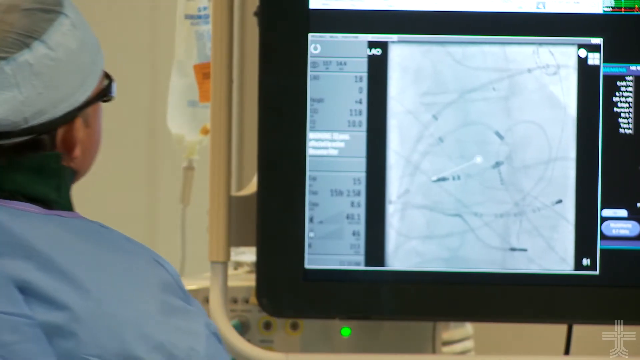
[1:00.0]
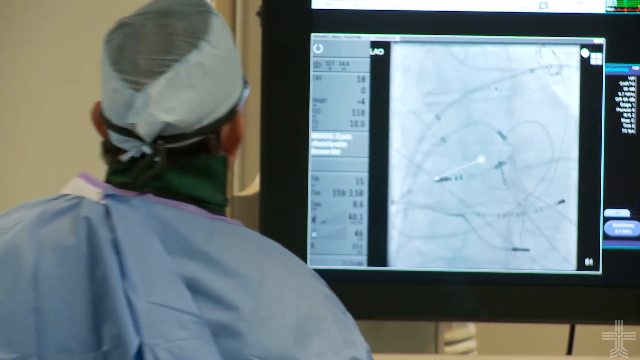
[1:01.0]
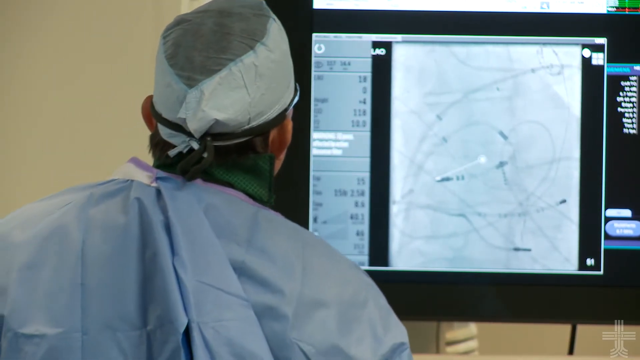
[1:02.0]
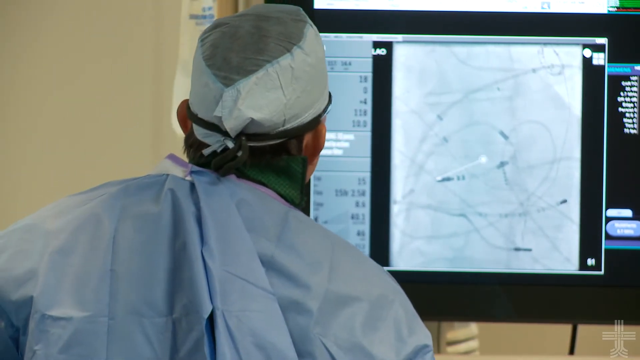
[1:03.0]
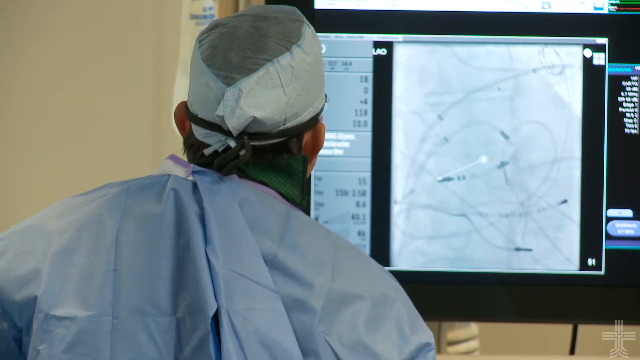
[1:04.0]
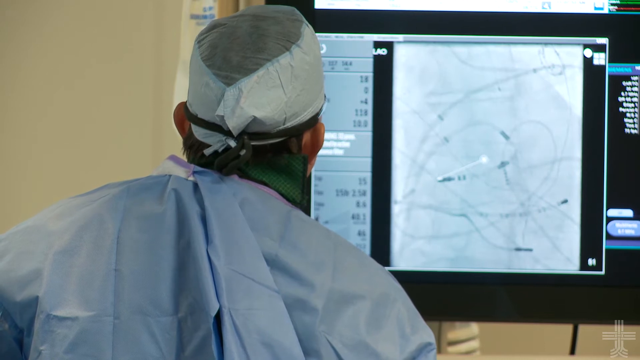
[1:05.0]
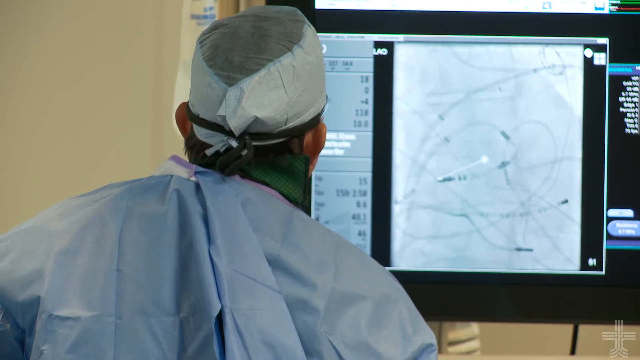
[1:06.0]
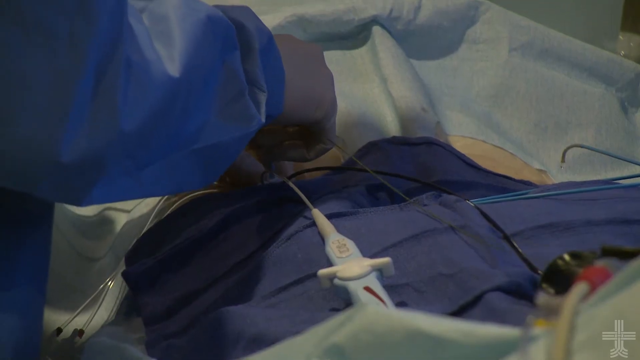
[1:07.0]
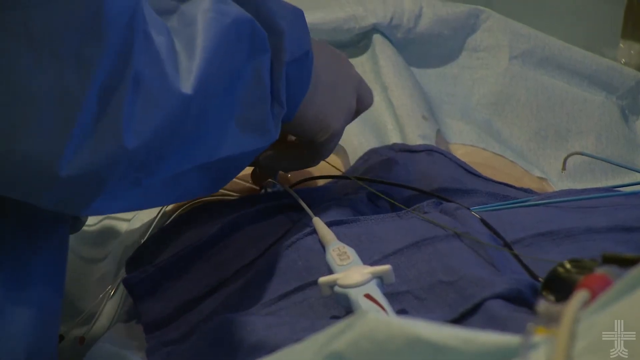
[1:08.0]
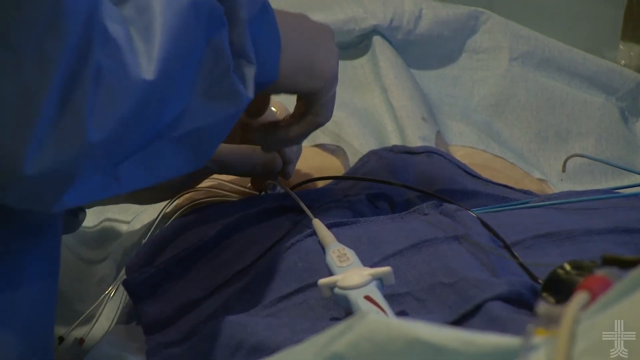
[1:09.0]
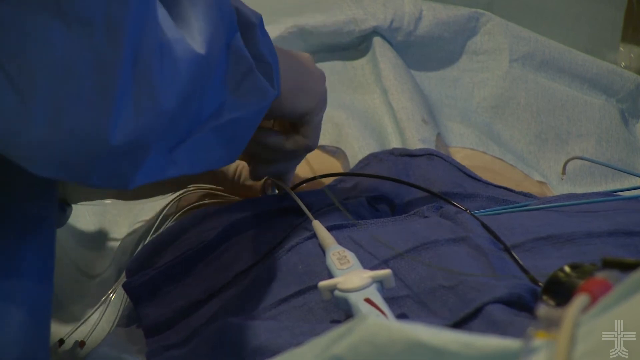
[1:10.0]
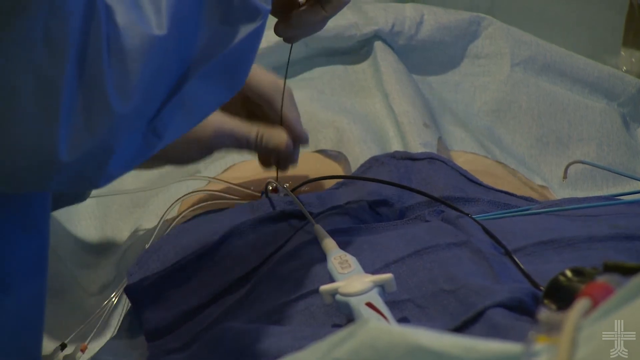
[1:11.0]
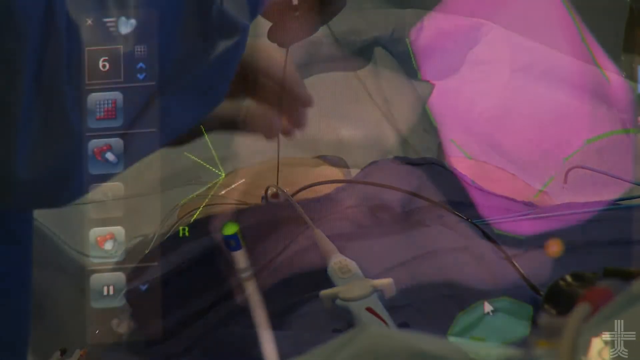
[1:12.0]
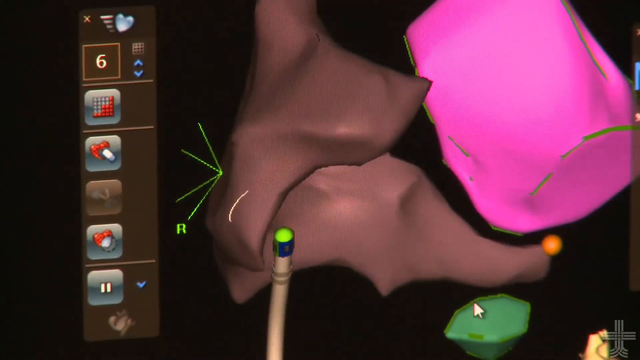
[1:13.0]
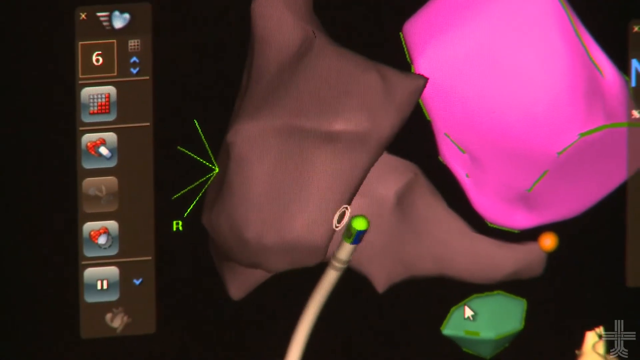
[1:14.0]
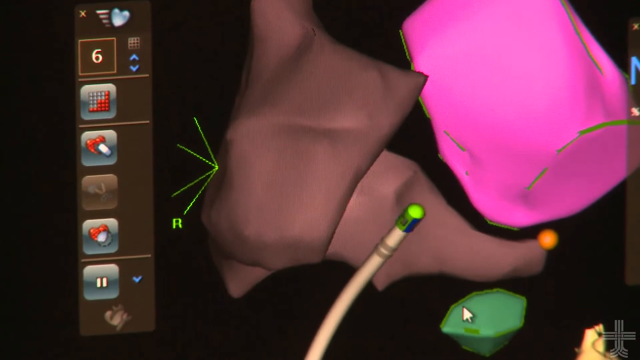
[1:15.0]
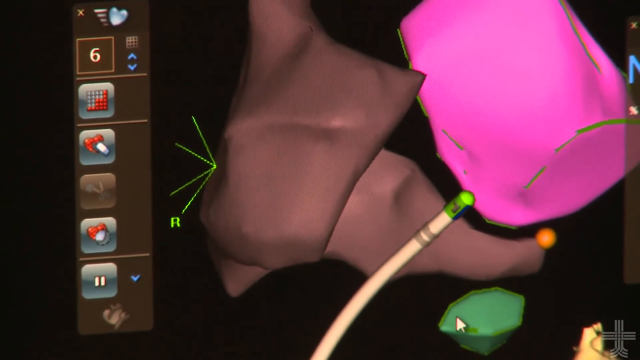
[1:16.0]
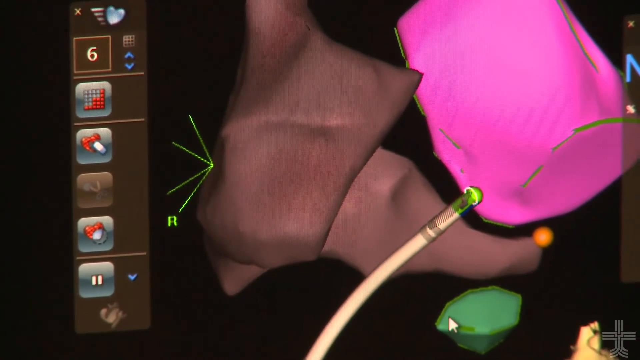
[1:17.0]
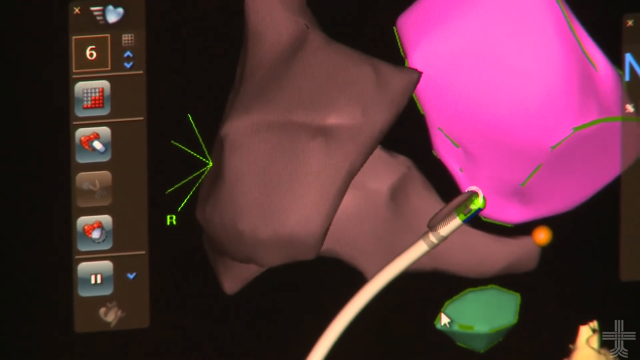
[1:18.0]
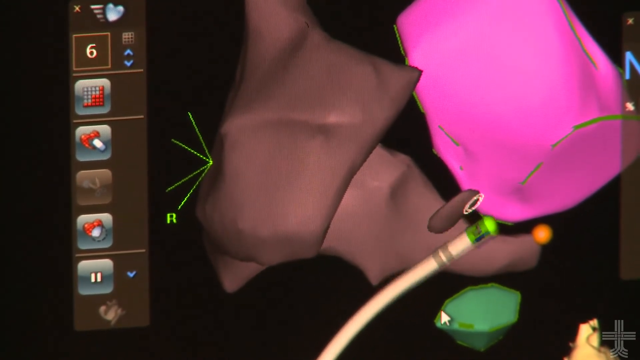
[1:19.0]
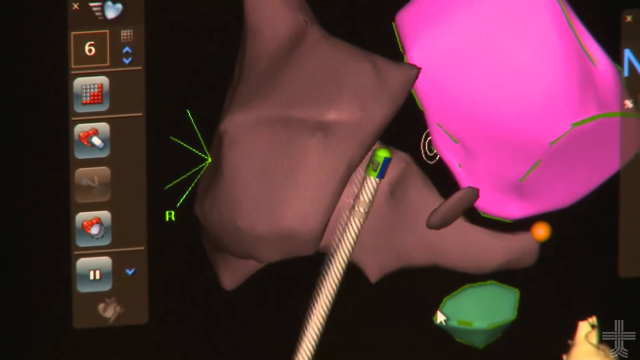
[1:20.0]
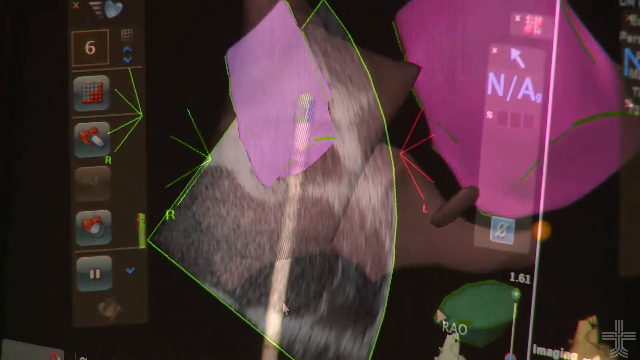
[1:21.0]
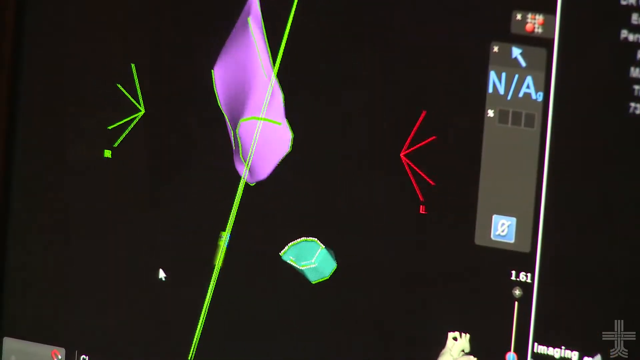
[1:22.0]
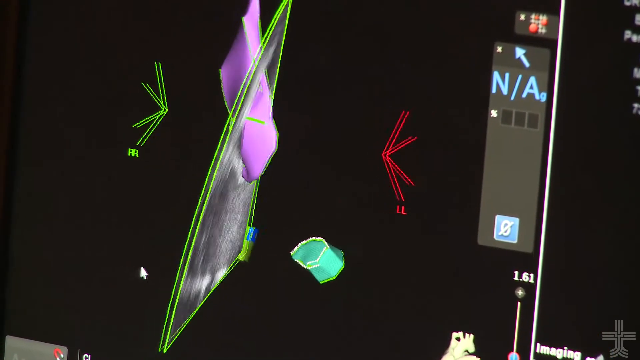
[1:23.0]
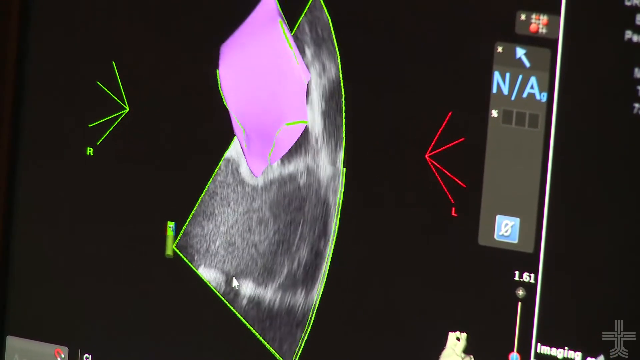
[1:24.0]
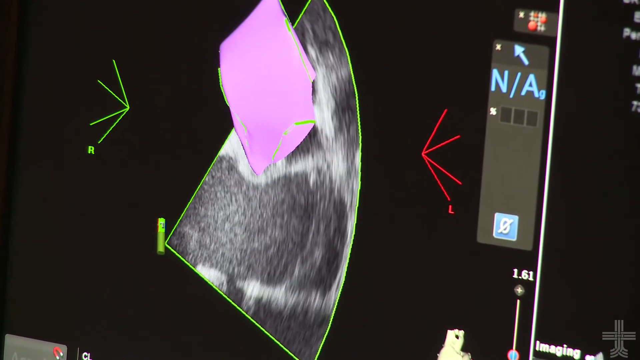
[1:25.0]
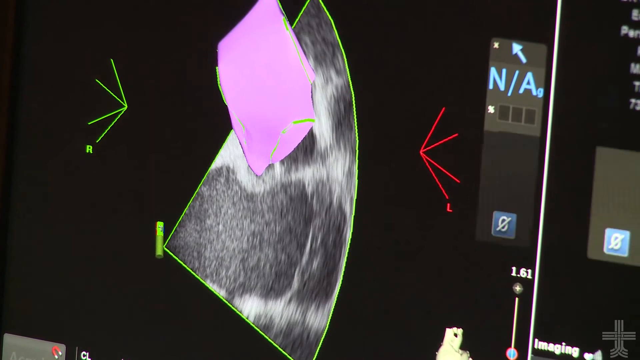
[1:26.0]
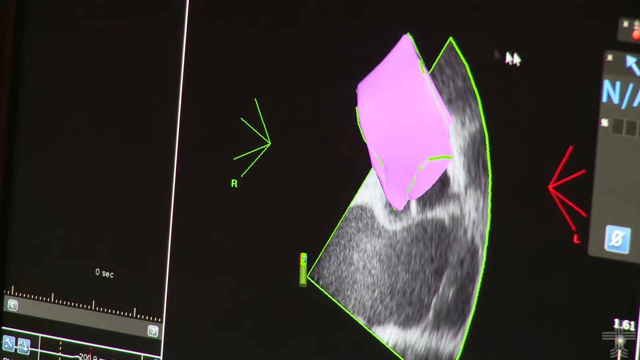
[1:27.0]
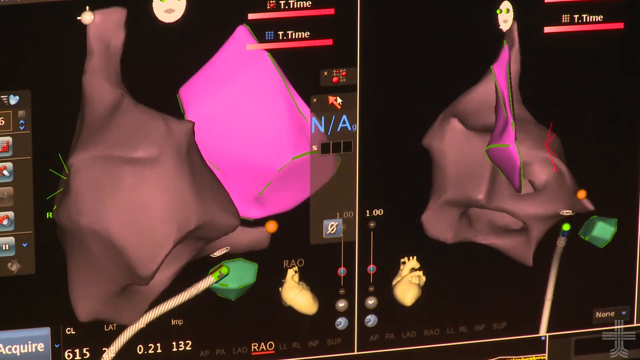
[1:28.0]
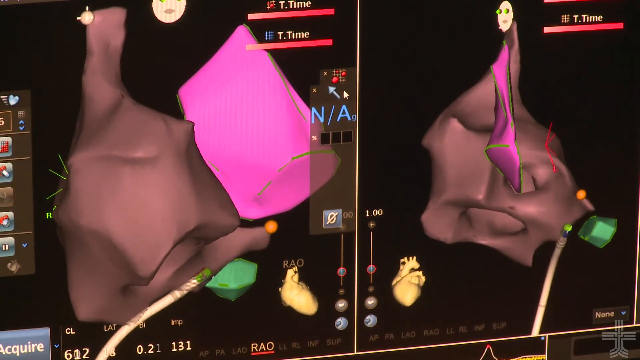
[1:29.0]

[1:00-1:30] In the procedure room, a monitor shows the medical procedure, and a doctor in a surgical gown and scrub cap looks at it. Something, probably an electrode, is threaded into a patient. A 3D rendering on a screen shows the electrode being moved inside the patient and where the electrode touches as part of the cardiac ablation. The procedure appears to be driven by the 3D rendering, showing a model of what is happening inside the patient in real time, and the doctor appears to be able to rotate the model while working.